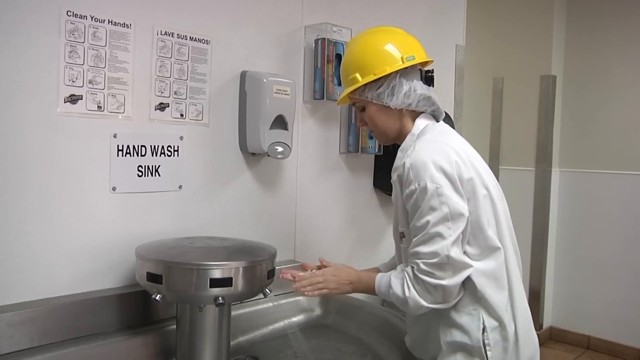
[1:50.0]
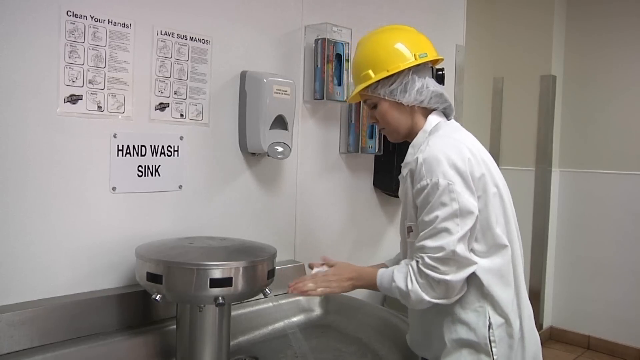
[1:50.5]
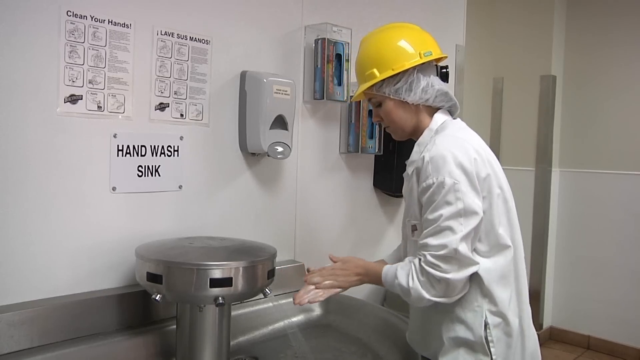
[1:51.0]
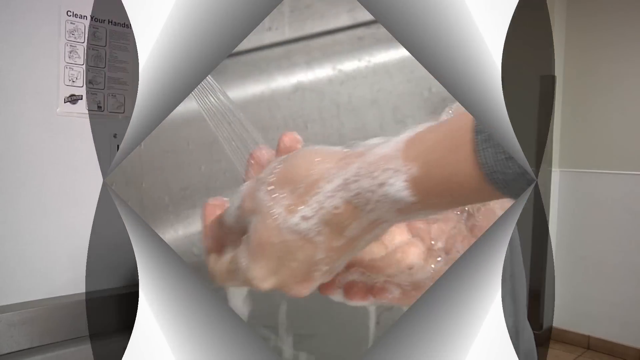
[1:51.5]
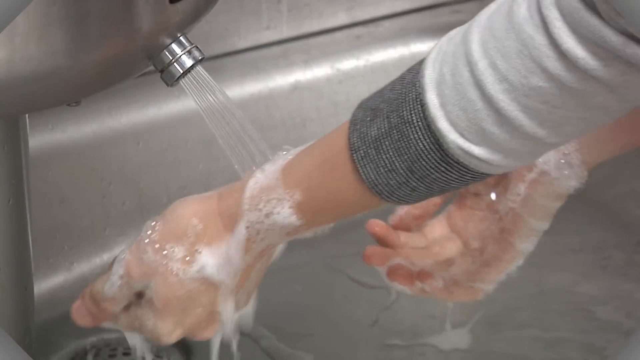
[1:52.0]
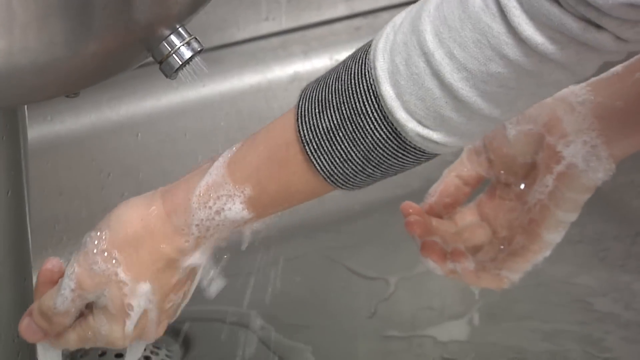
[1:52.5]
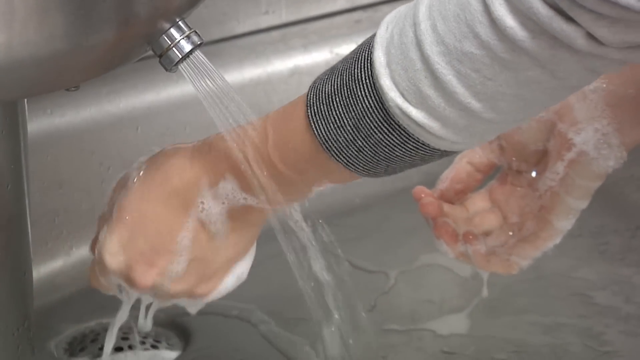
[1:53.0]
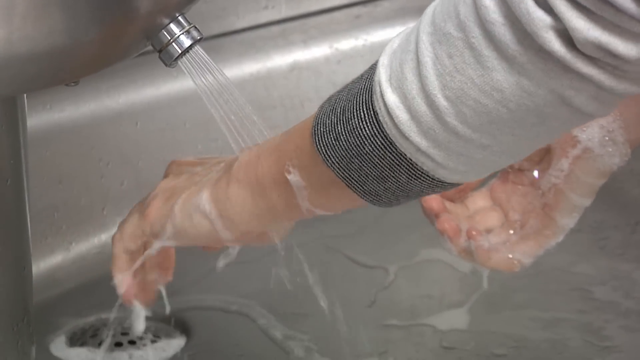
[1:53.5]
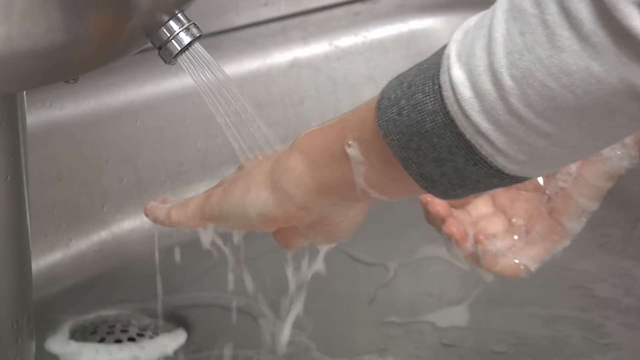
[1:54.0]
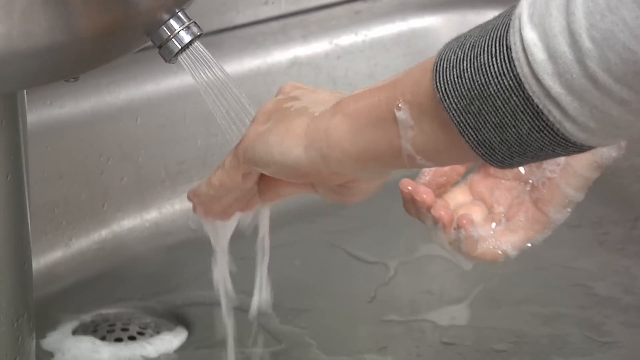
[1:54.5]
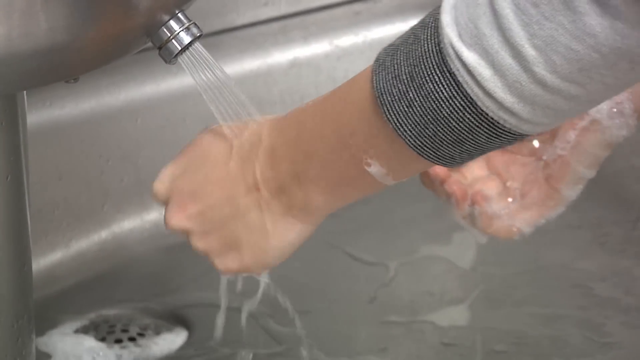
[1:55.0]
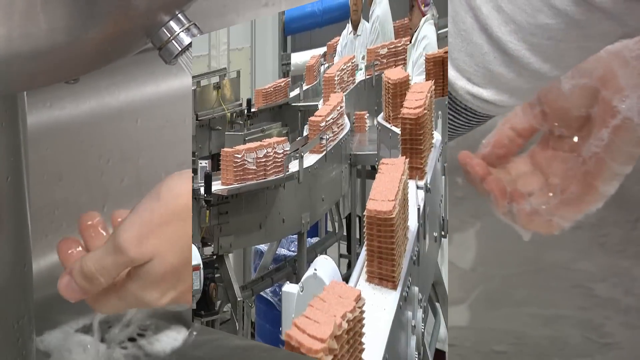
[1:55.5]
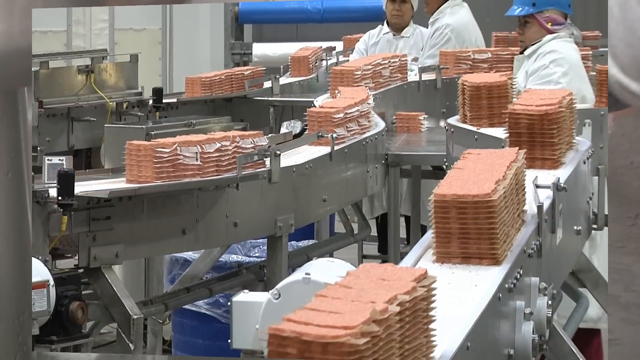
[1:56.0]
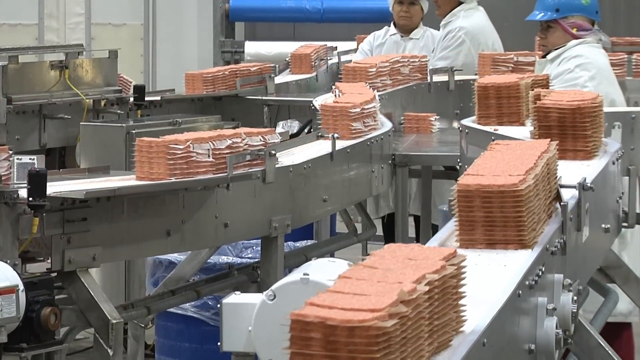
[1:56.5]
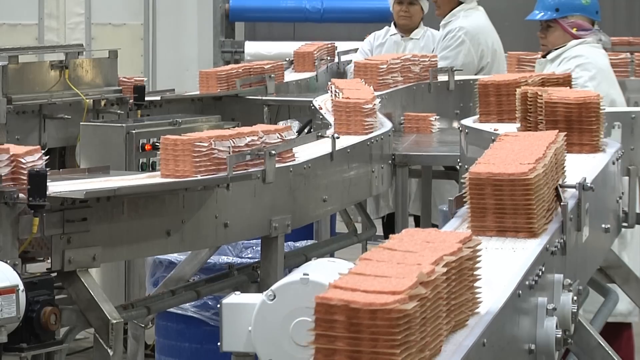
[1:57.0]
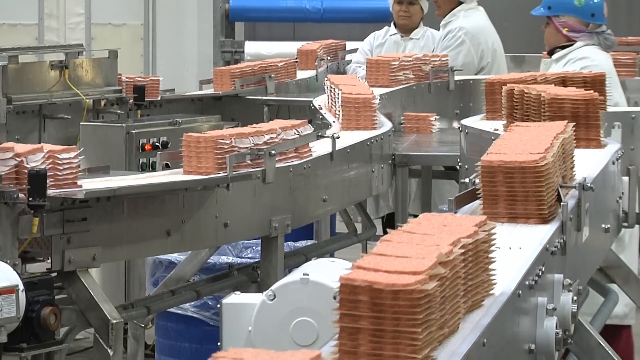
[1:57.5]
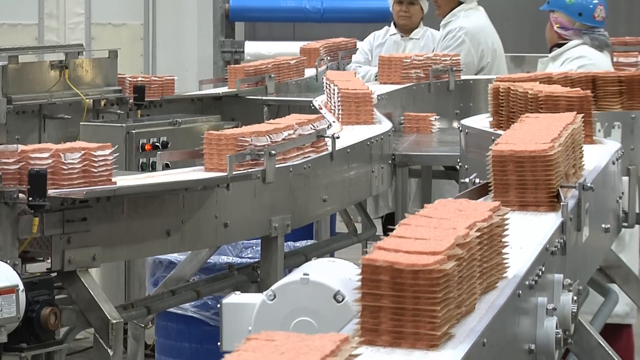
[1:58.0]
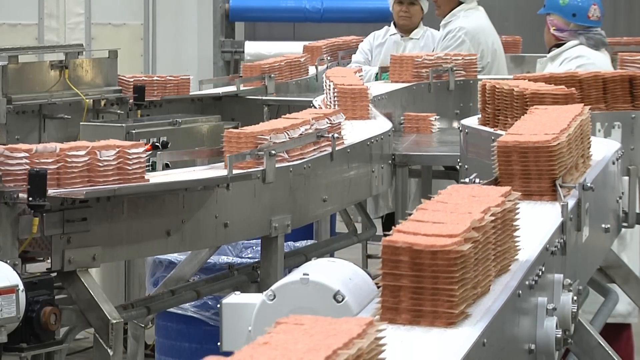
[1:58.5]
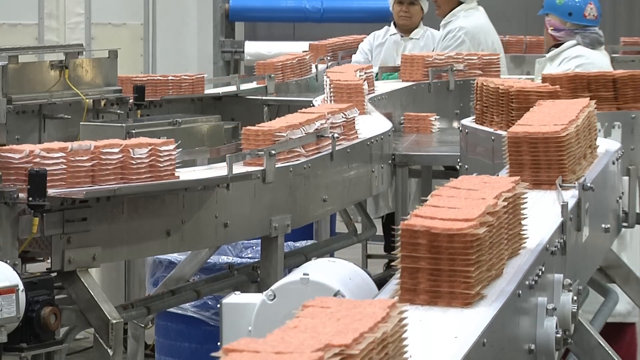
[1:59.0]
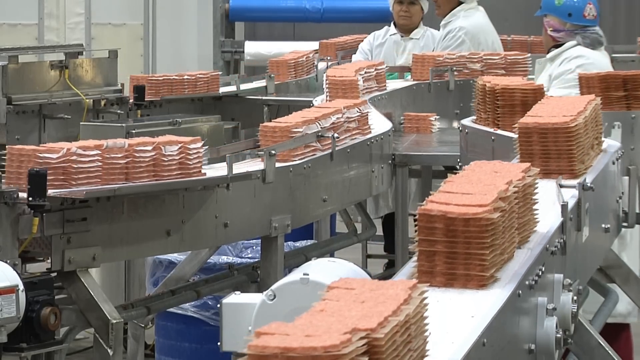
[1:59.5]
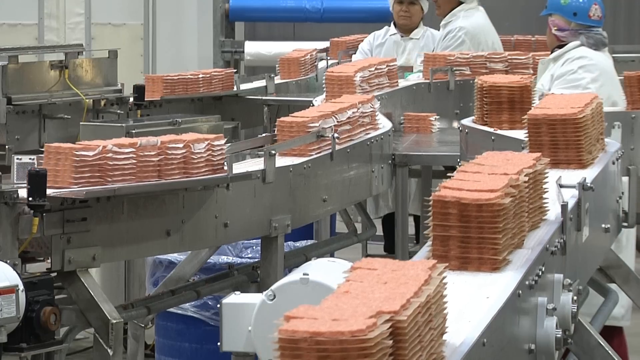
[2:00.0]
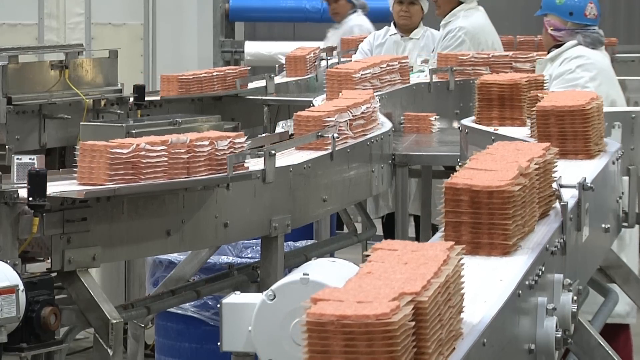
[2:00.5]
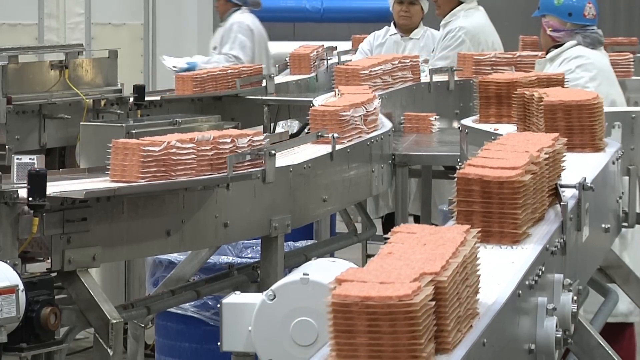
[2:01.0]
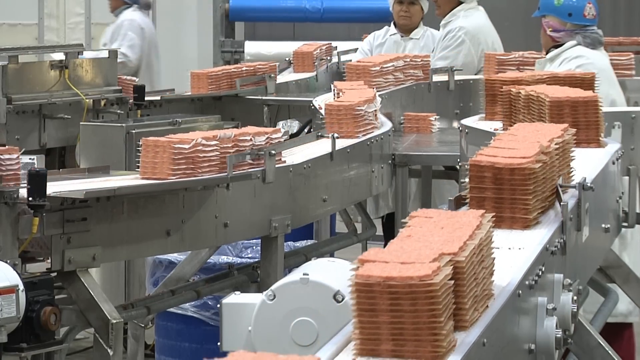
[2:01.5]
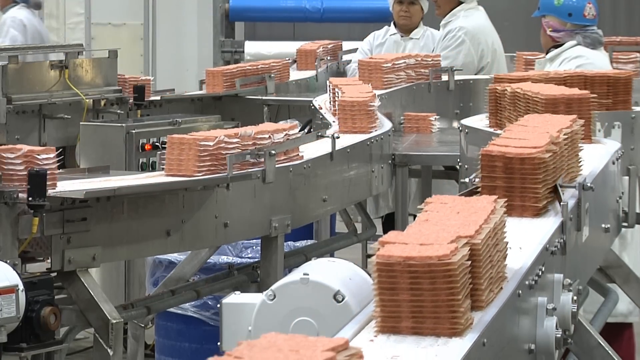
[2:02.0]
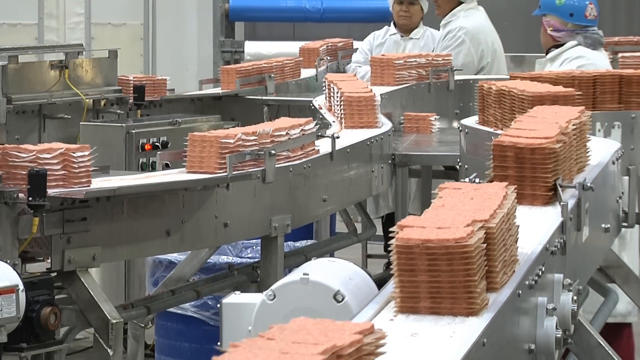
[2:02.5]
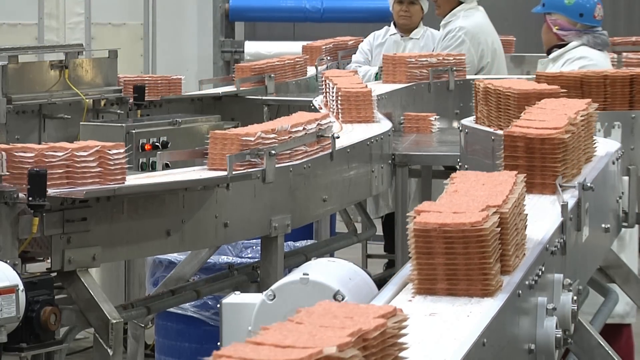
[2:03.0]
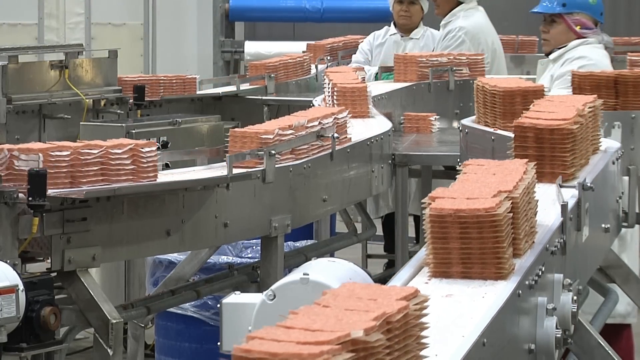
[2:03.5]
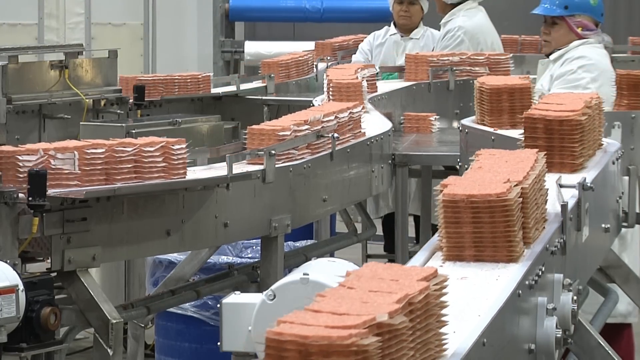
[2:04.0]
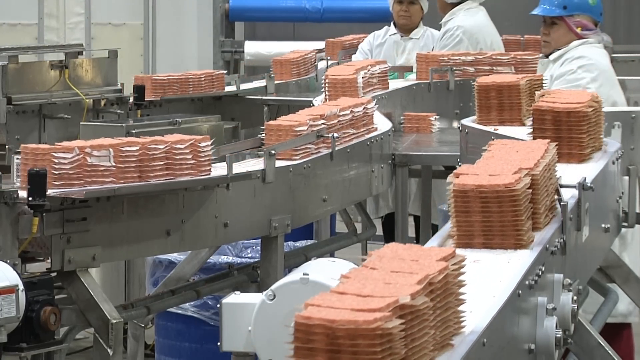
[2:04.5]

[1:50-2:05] Handwashing is demonstrated, with hands washed between the fingers and on both sides. The setting looks like some sort of bathroom. The scene then returns to the warehouse floor, where there seems to be a visual inspection of the meat: people look like they are standing around, apparently inspecting the meat as it goes by. There seem to be some blue bins.